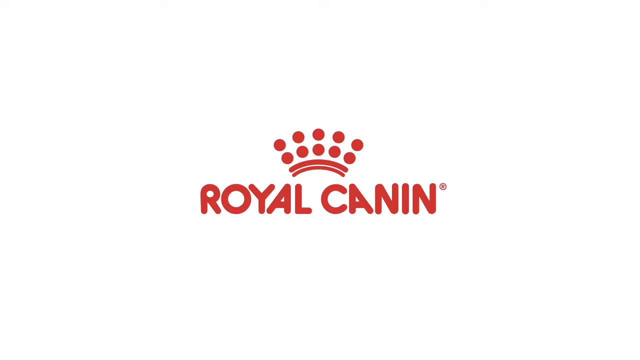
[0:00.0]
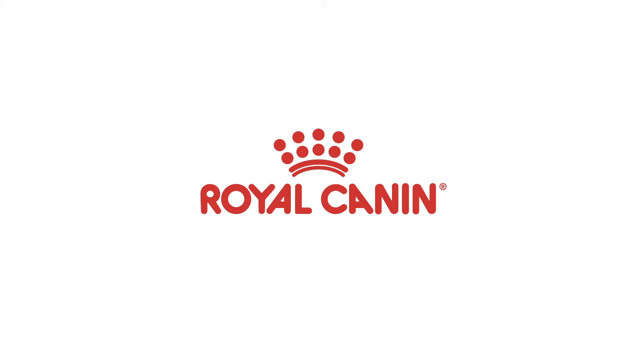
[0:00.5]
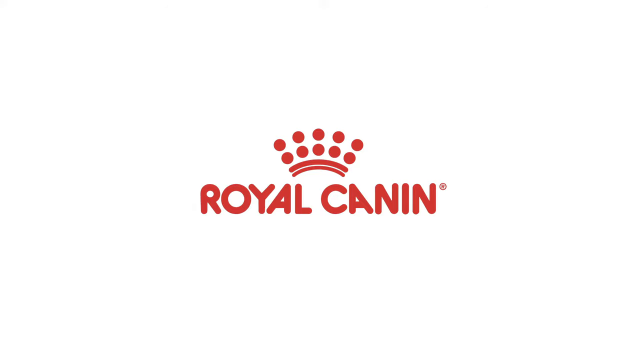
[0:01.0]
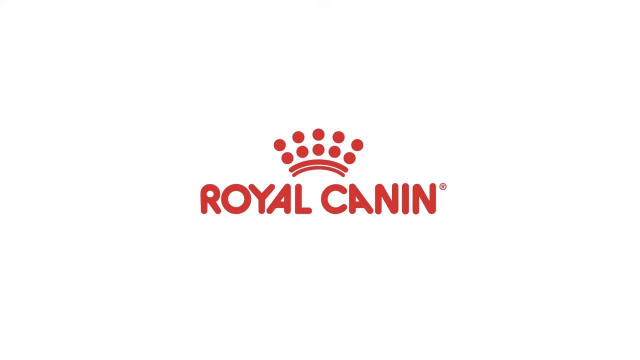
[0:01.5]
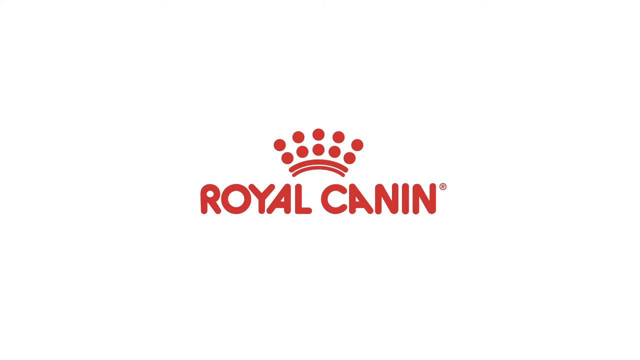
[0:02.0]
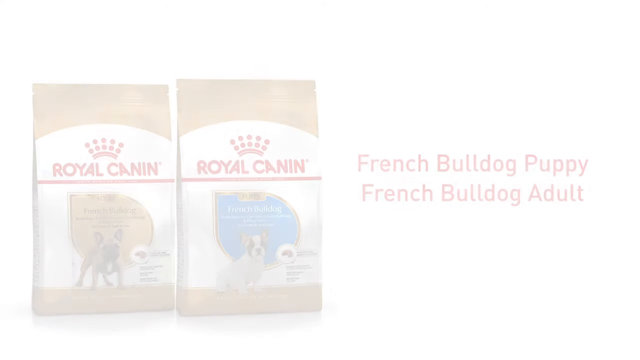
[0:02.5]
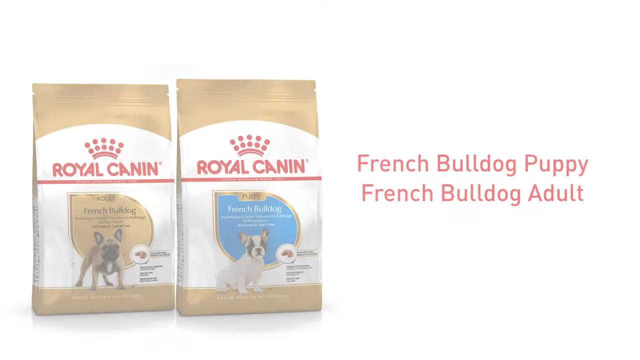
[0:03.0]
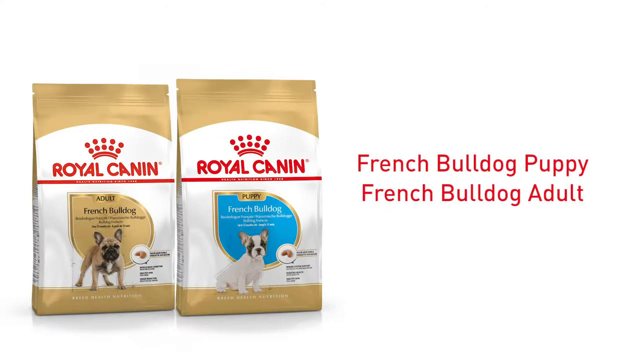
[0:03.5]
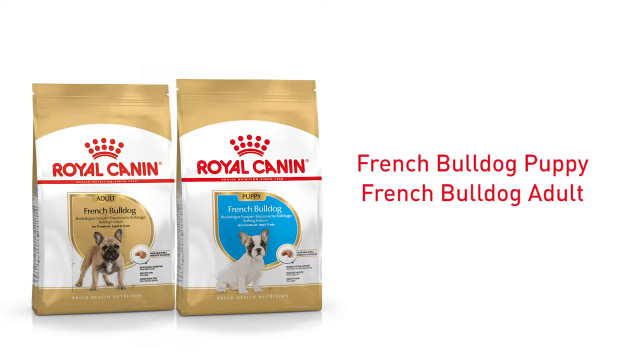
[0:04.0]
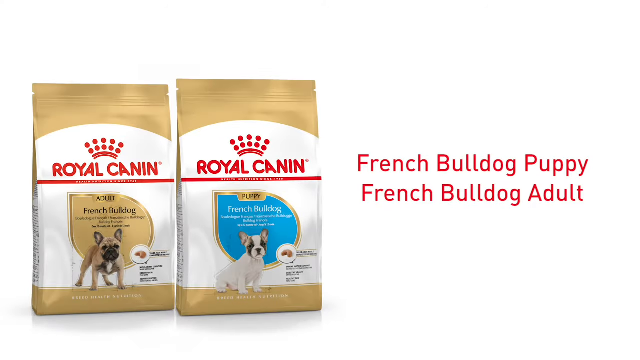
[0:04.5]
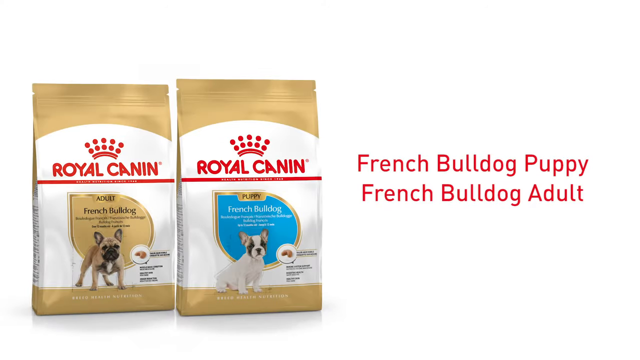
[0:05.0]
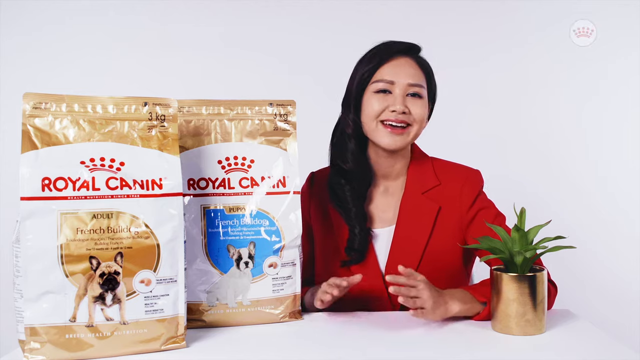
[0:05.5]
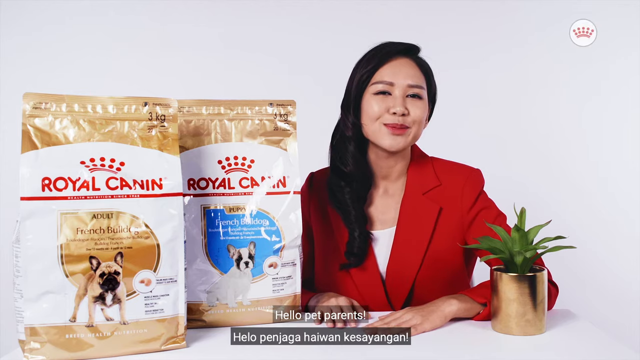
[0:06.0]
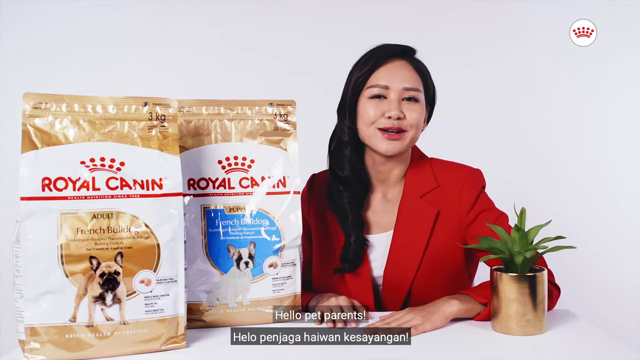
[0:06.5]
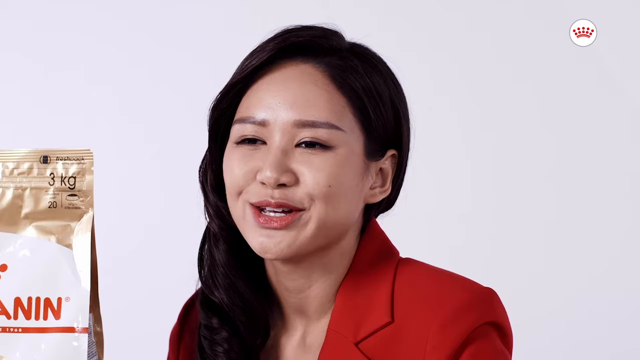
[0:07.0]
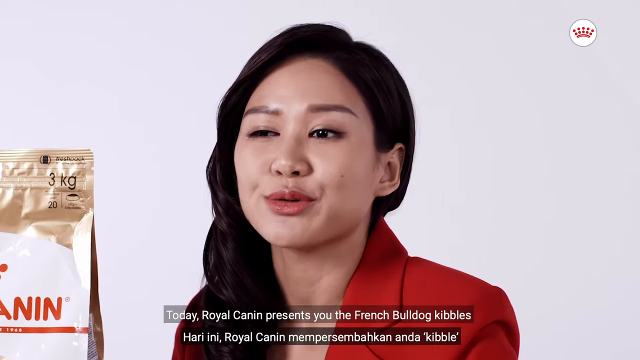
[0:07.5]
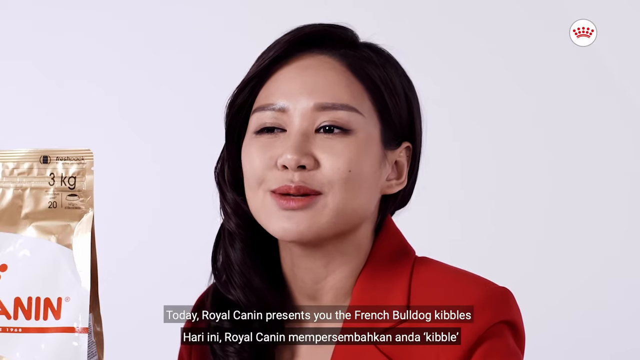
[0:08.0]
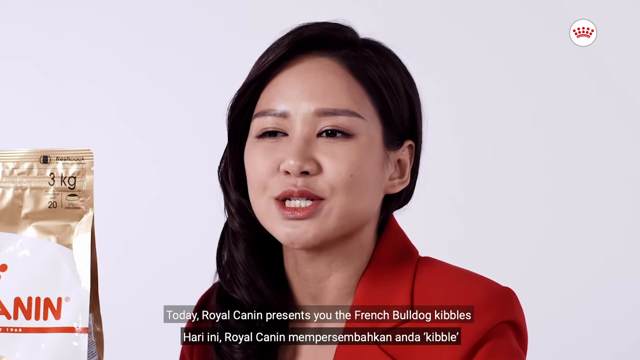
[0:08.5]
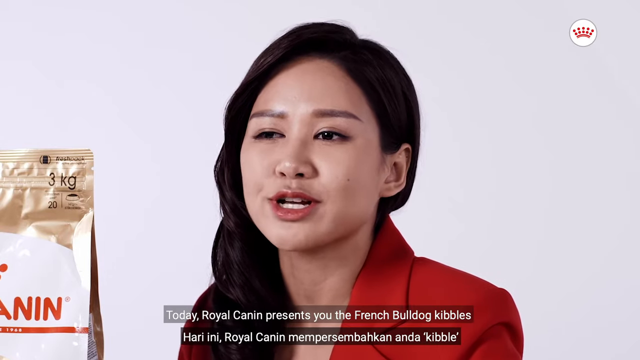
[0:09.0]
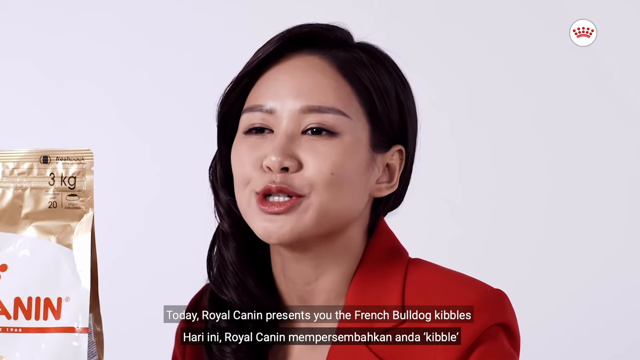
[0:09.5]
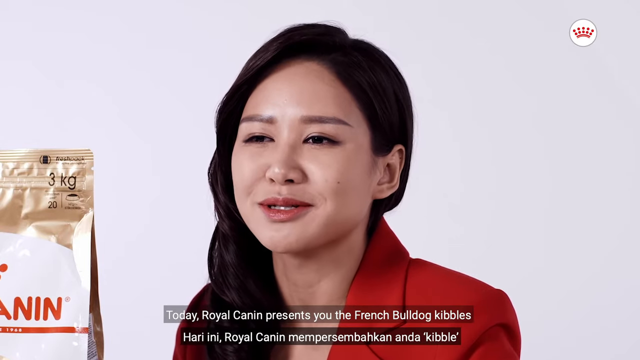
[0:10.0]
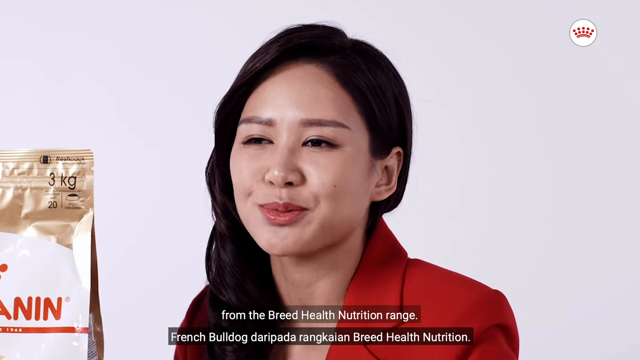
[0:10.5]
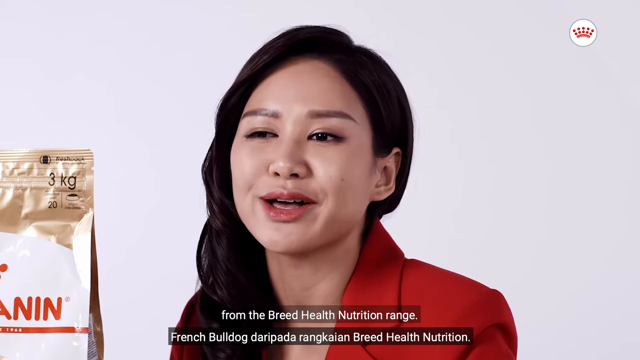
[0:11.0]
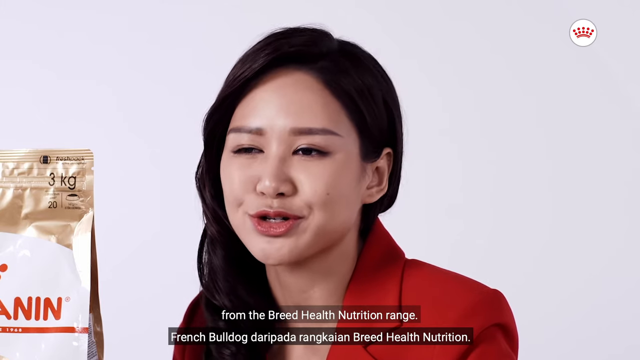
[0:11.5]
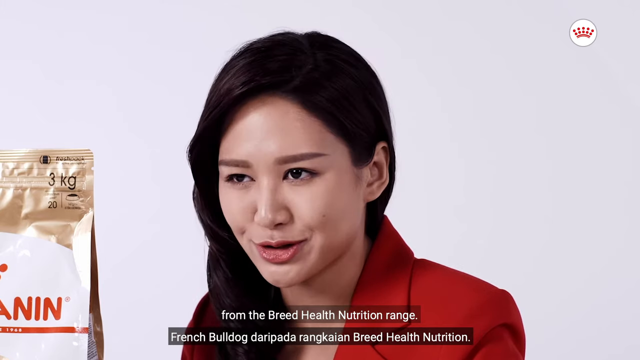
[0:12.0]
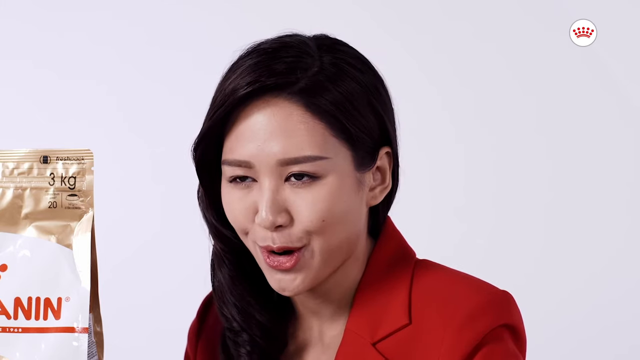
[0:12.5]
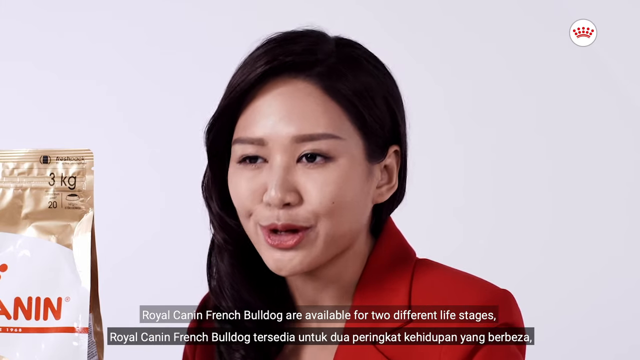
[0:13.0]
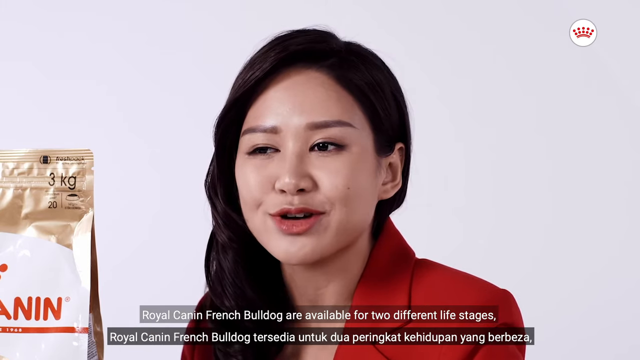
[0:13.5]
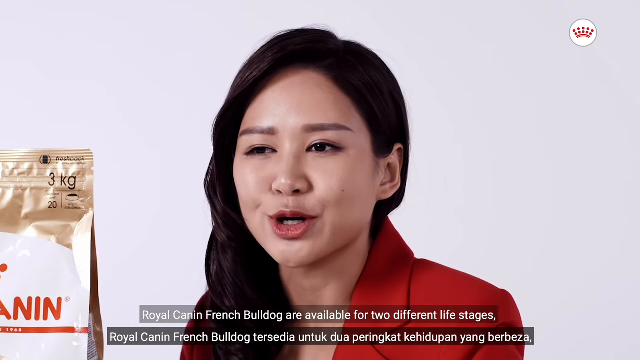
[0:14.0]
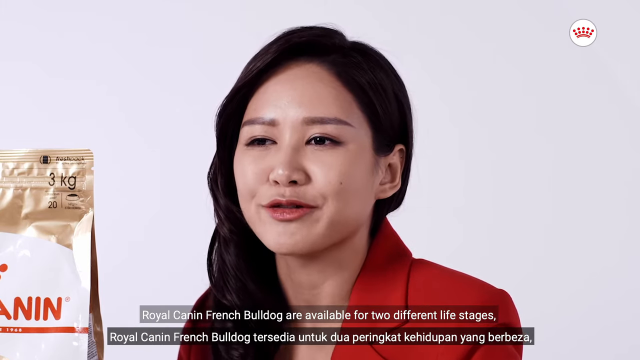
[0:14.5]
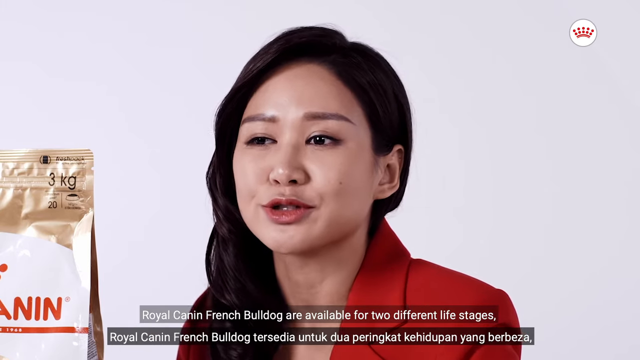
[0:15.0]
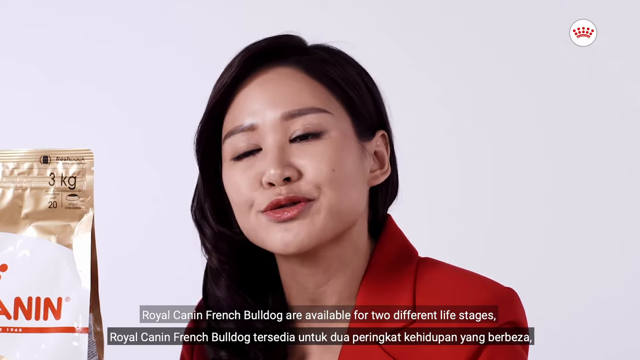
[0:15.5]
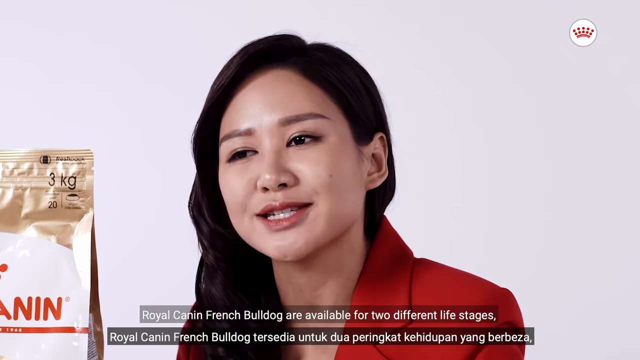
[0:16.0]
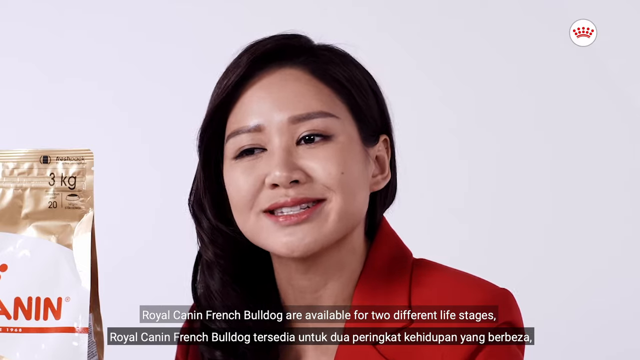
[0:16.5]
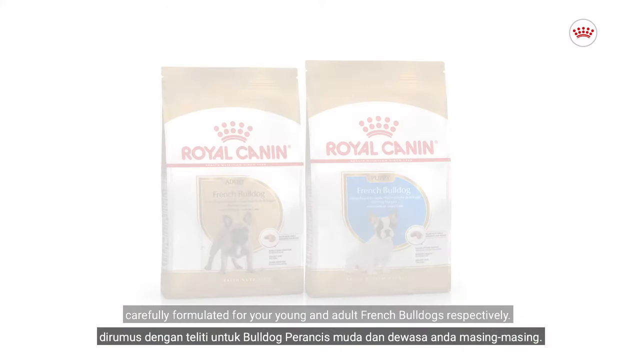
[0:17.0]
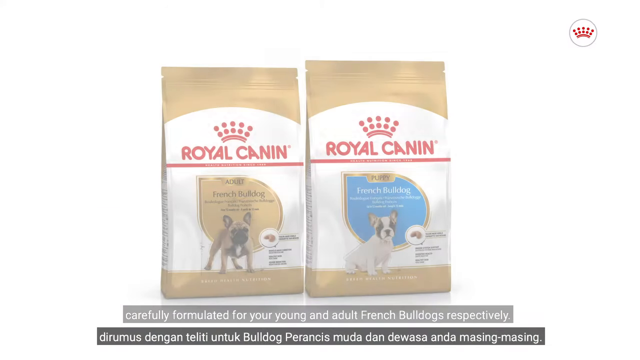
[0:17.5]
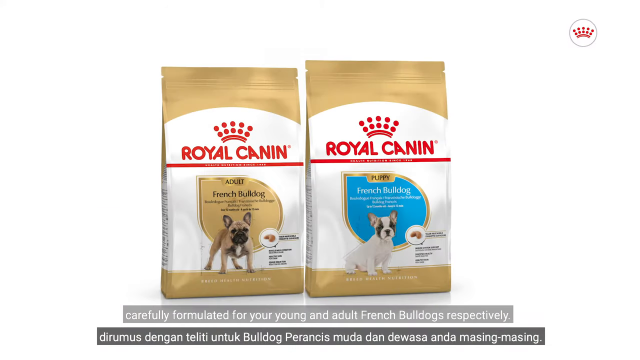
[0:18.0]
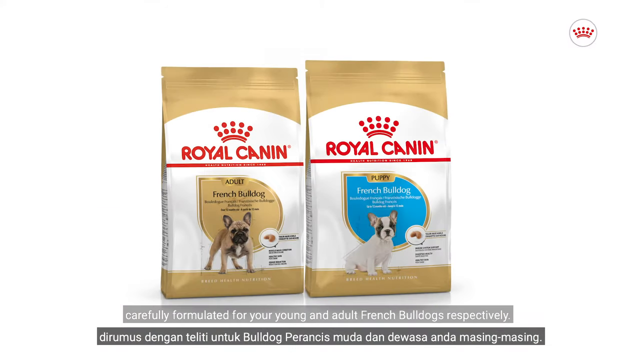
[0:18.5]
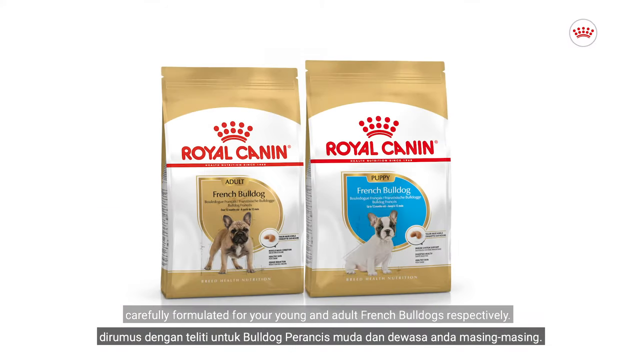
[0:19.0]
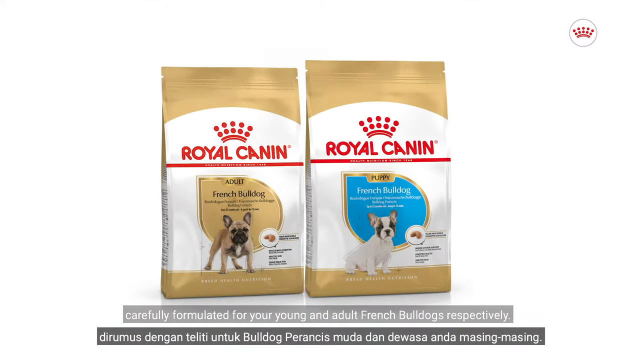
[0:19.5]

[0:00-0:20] The video, from Royal Canin, opens on a whitish gray background with the Royal Canin logo: the two words "Royal Canin" with a headdress- or crown-type icon above them, marked as a registered trademark. The logo disappears and two bags of Royal Canin dog food appear on the left side of the screen. To the right of the bags, in red text, are their names: one says "French Bulldog puppy" and the other "French Bulldog adult".